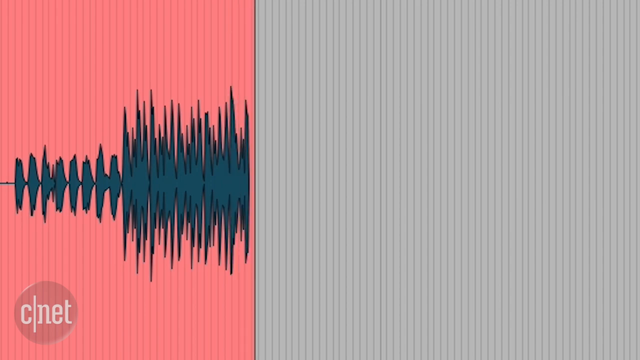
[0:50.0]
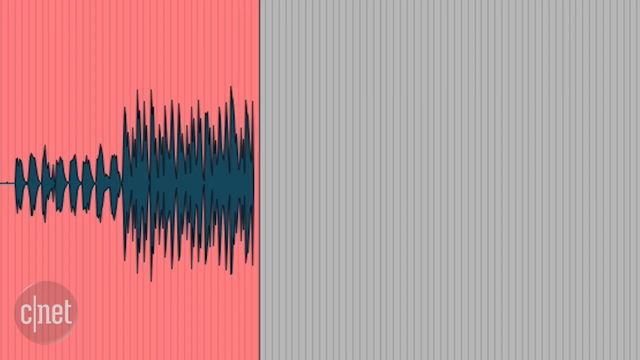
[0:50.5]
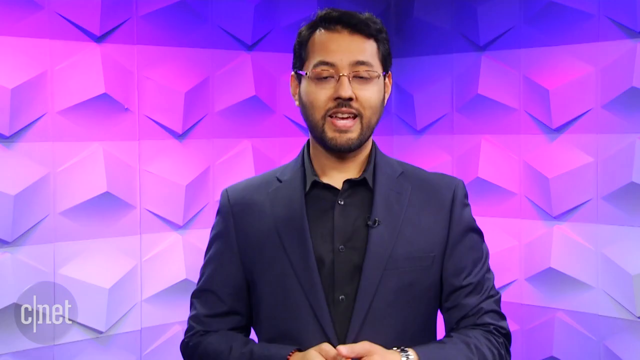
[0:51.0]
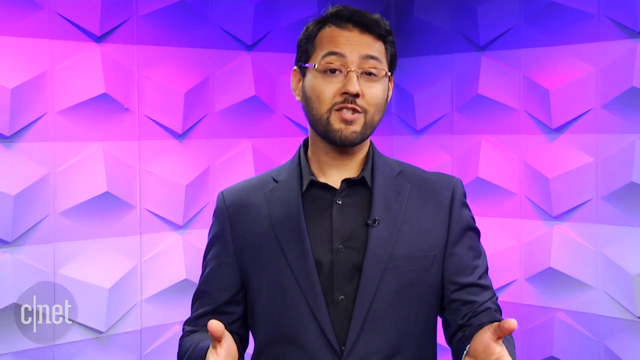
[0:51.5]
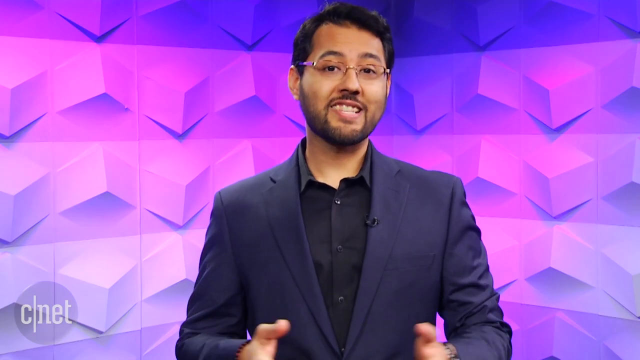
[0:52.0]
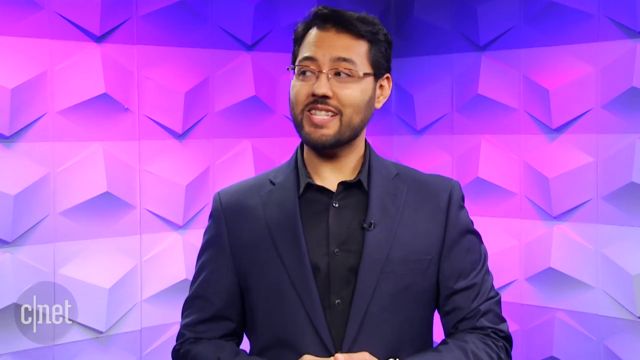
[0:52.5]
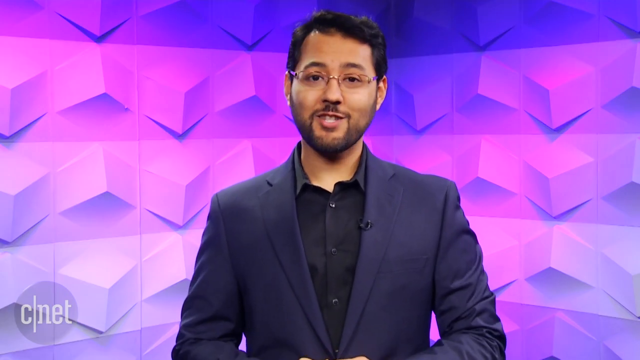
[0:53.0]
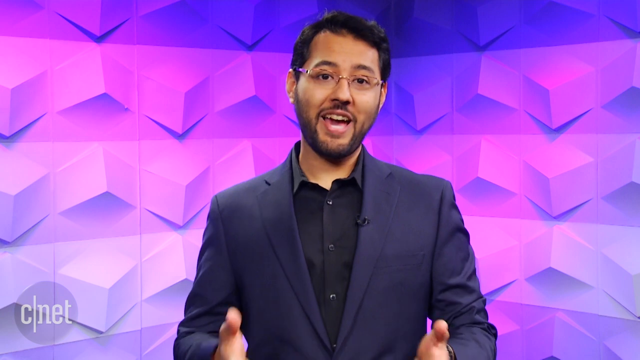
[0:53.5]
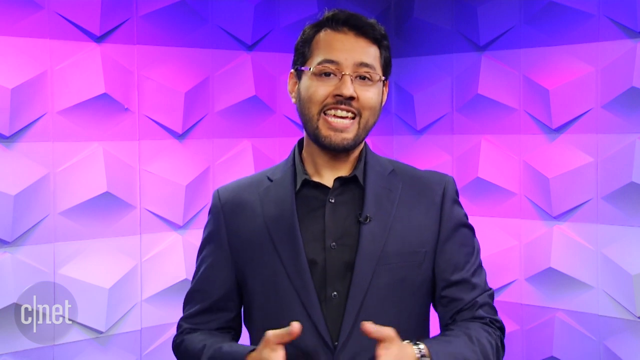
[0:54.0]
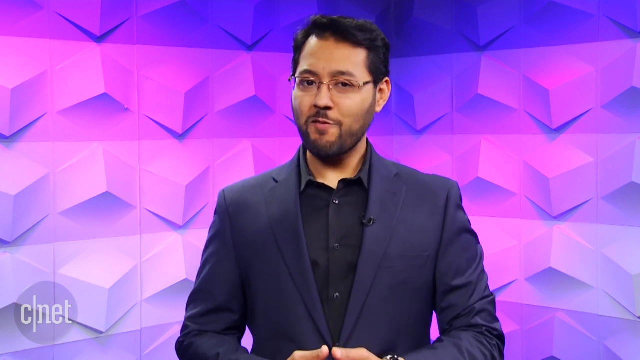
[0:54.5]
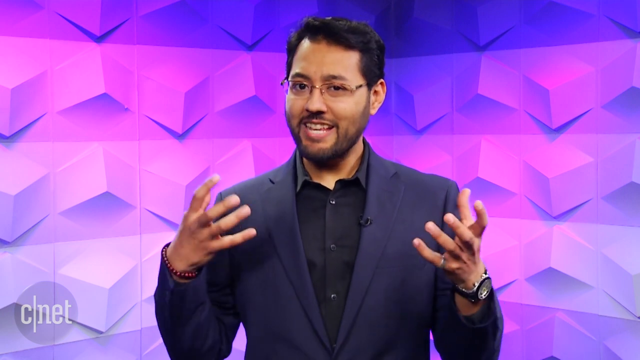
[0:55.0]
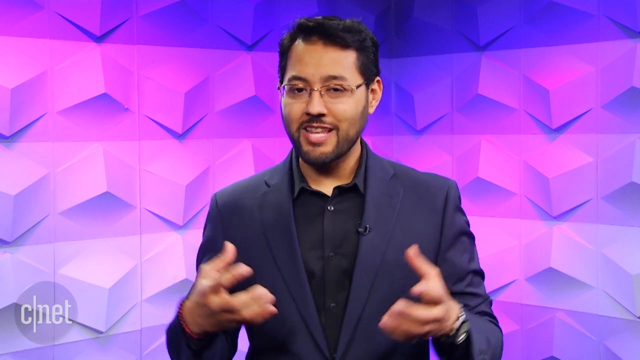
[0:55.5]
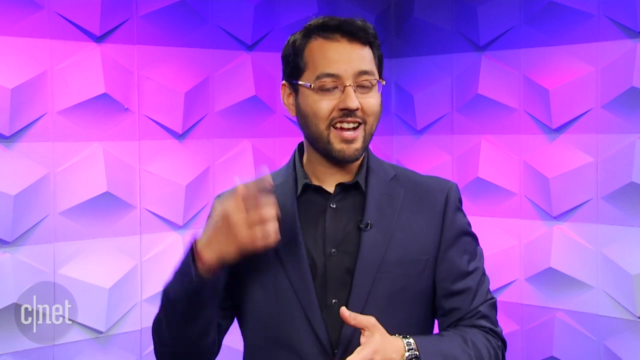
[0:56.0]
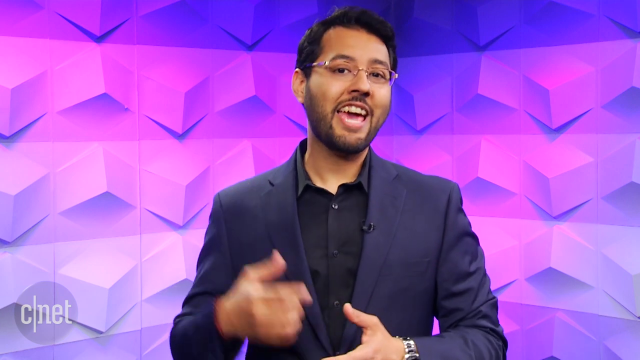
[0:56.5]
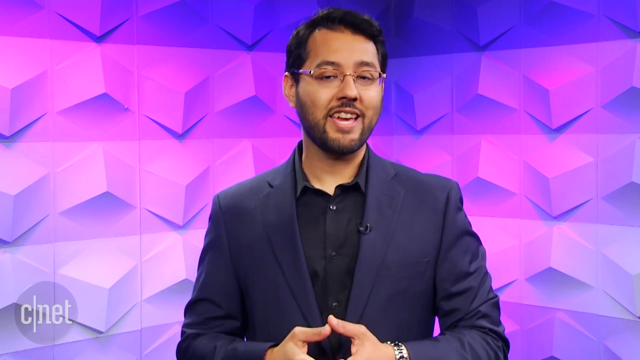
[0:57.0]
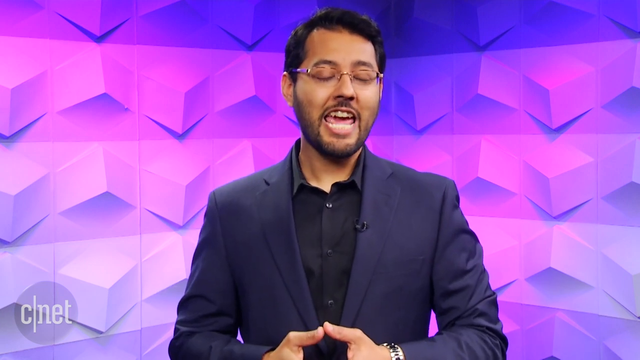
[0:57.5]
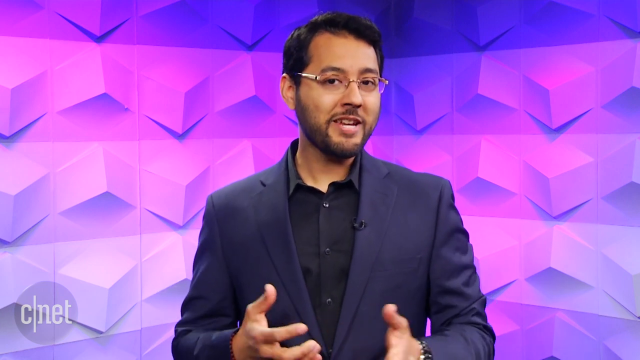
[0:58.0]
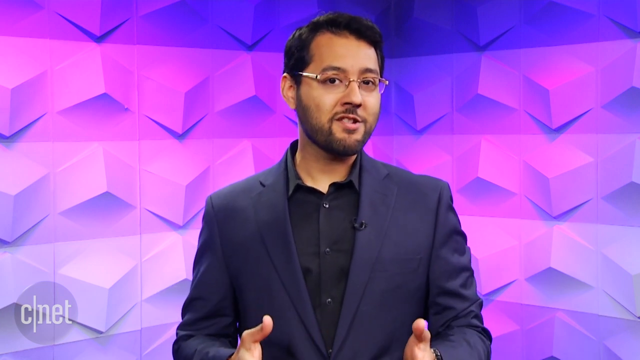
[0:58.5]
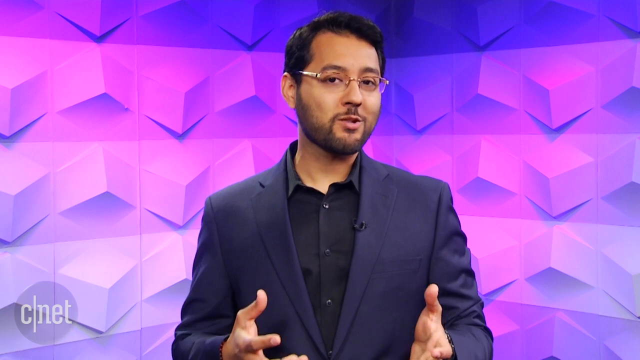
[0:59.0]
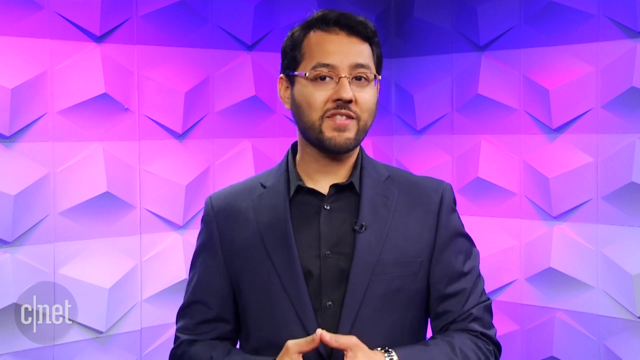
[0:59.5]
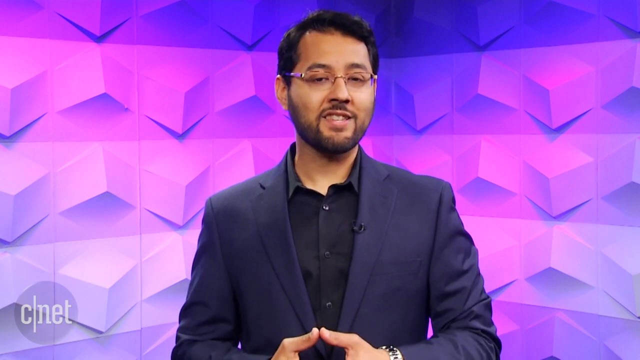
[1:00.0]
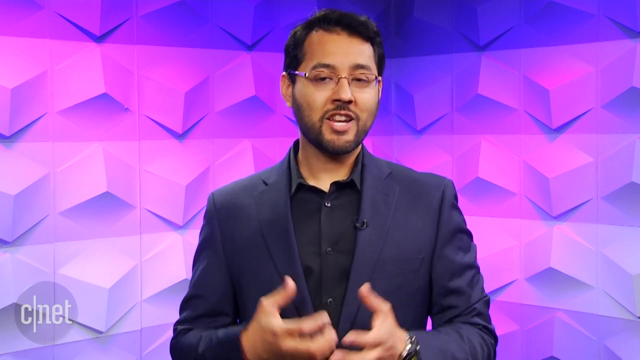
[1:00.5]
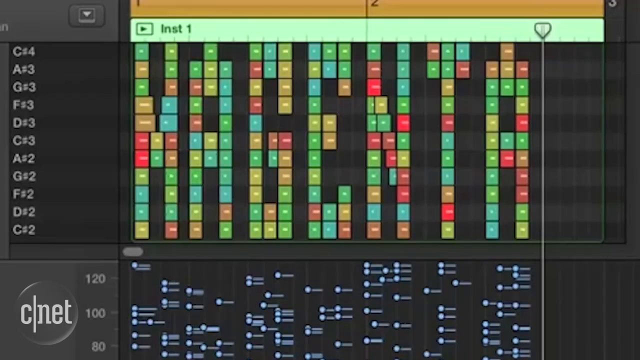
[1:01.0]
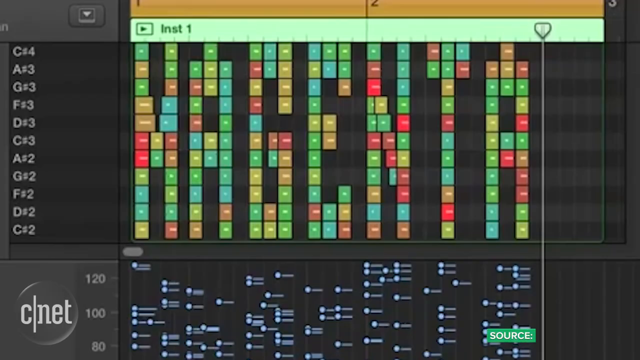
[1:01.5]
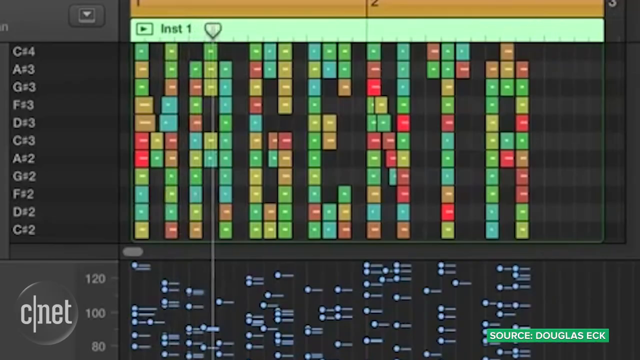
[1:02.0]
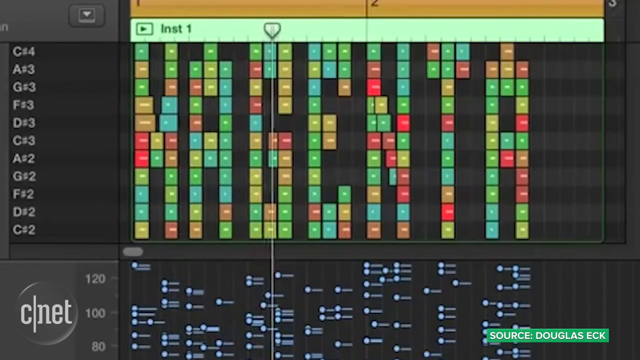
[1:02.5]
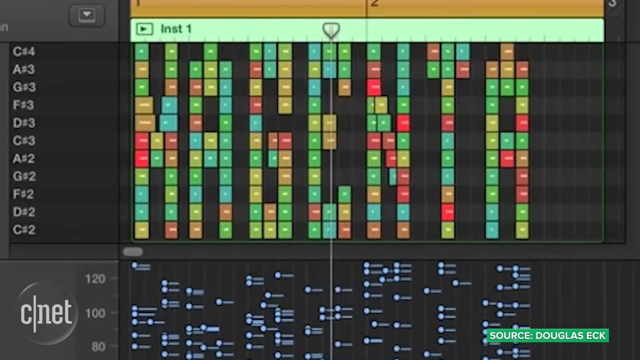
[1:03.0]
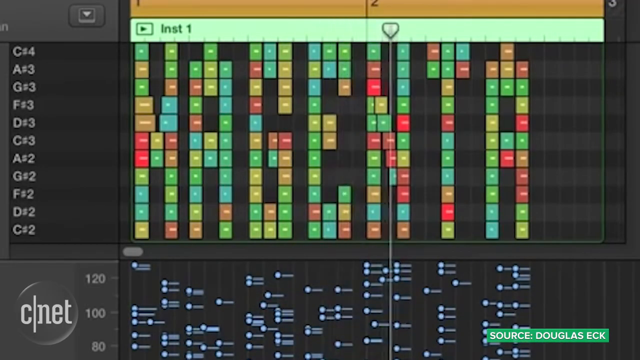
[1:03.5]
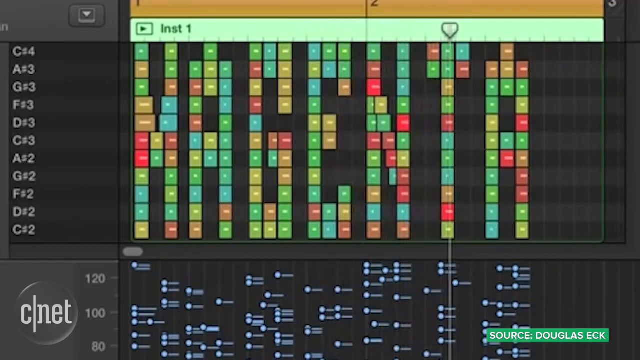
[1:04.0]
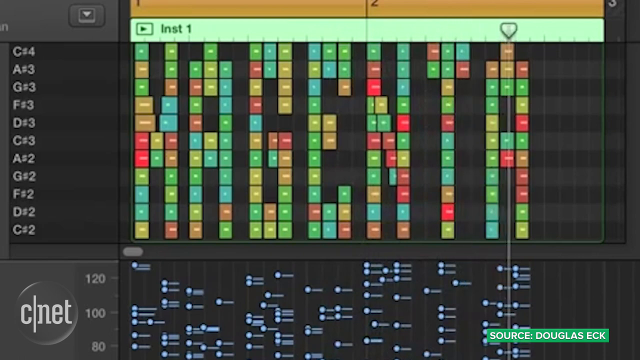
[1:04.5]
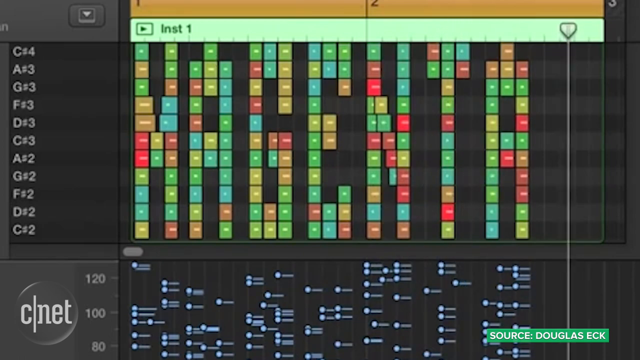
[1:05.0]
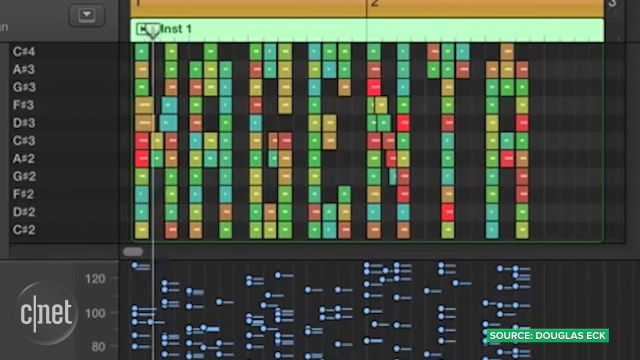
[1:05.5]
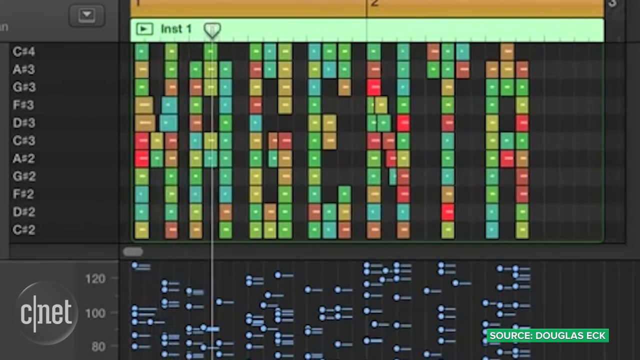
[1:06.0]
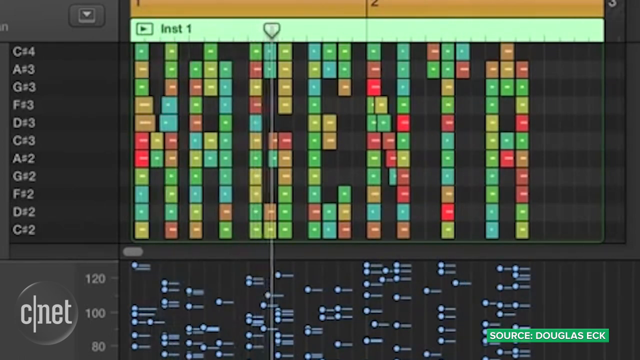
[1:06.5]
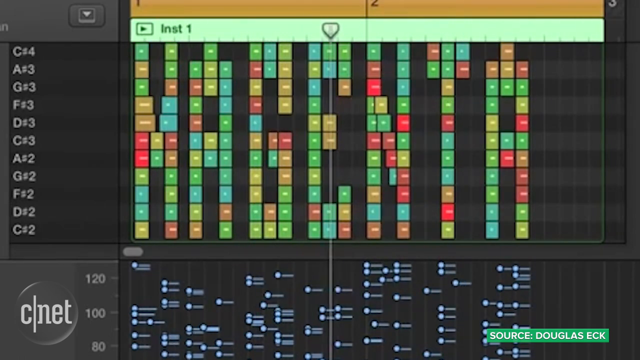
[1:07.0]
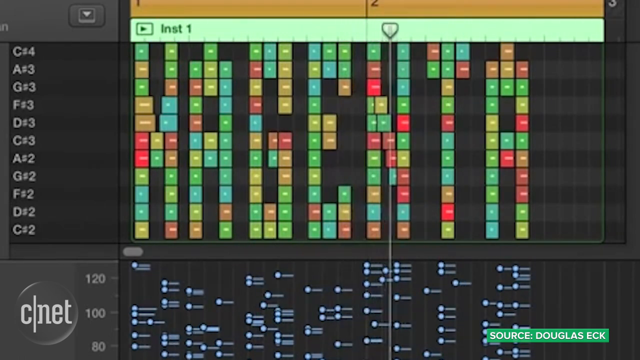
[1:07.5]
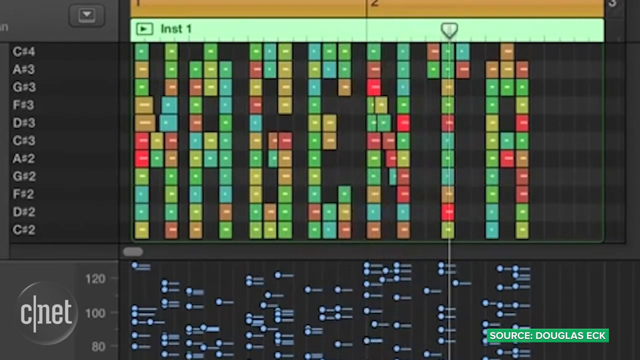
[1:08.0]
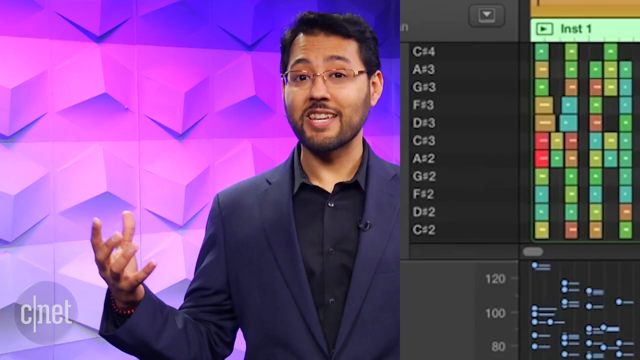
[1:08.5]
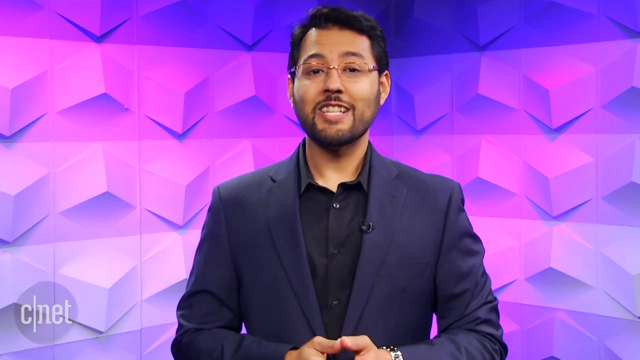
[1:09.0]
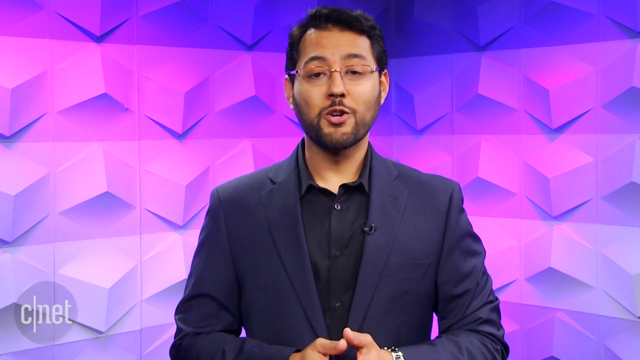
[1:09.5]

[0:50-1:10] The anchor talks about the news with much excitement. Then another program is shown, a kind of tool in which the word magenta is turned into sound: each letter and spot of the word is associated with a different sound, apparently showing how the code creates the music.